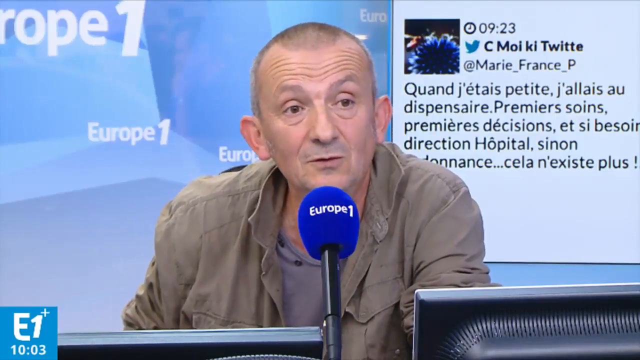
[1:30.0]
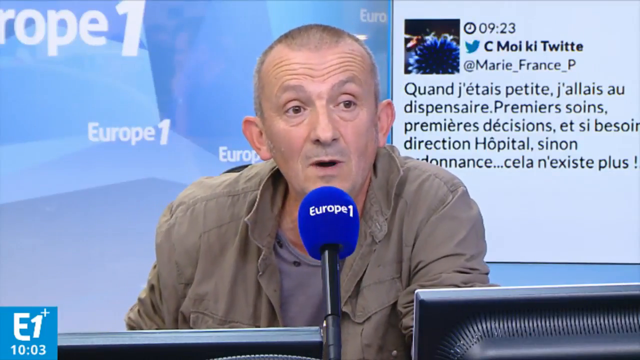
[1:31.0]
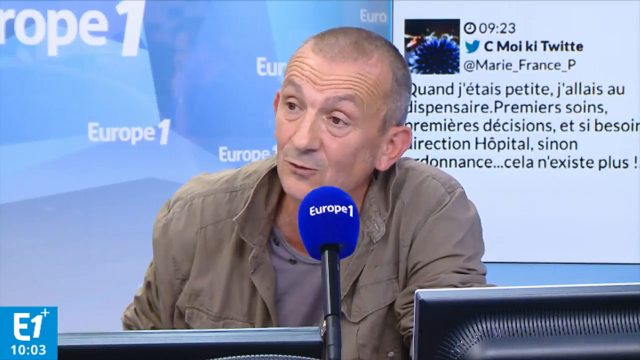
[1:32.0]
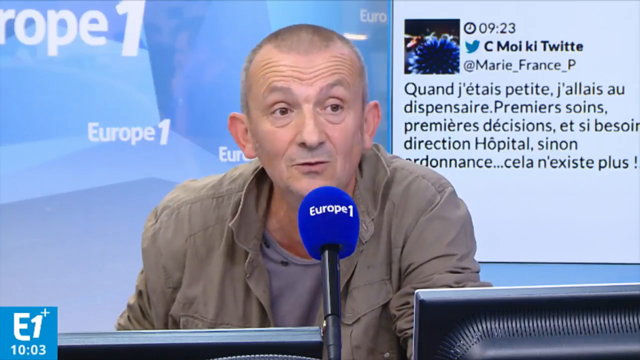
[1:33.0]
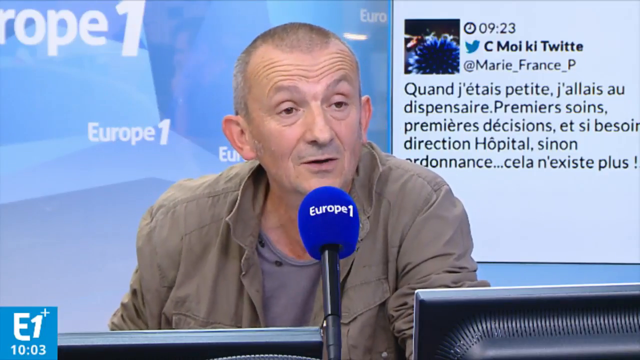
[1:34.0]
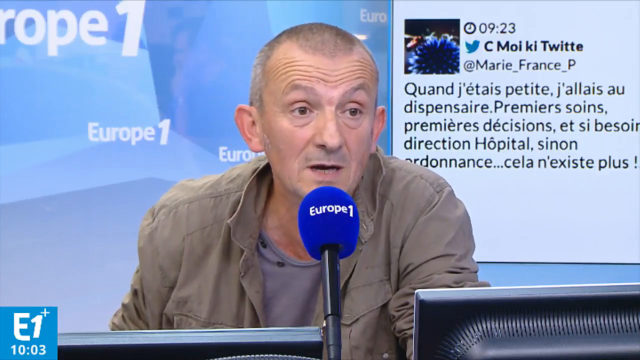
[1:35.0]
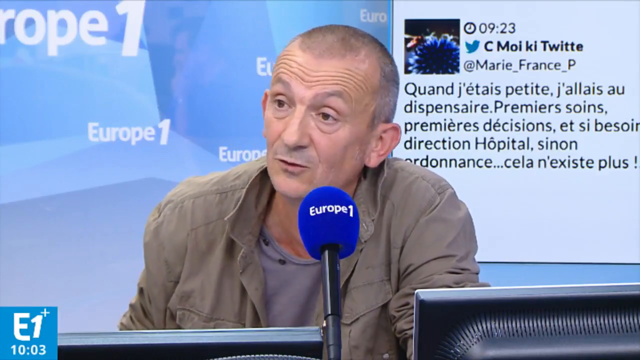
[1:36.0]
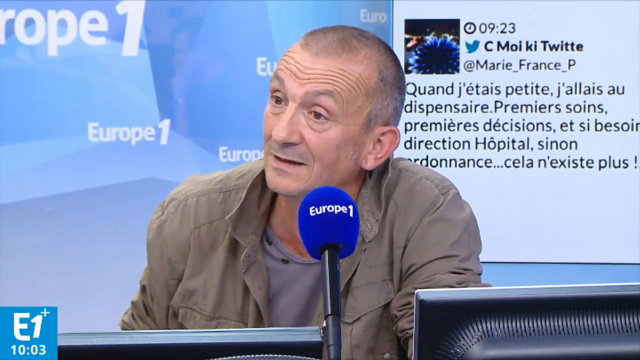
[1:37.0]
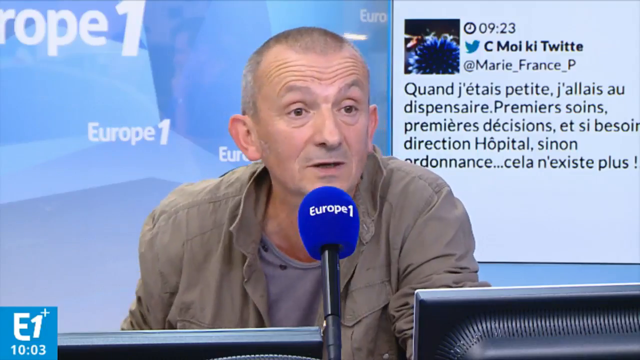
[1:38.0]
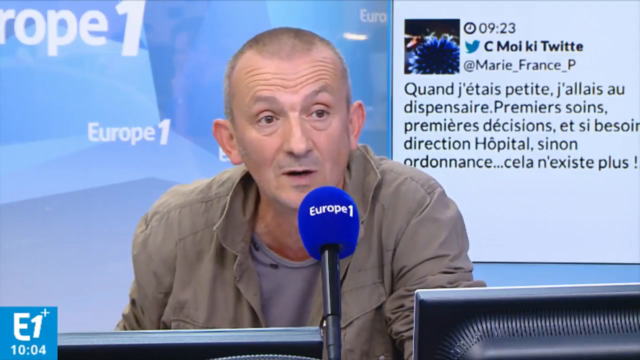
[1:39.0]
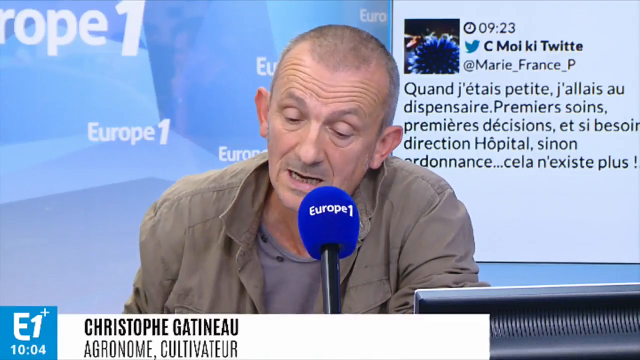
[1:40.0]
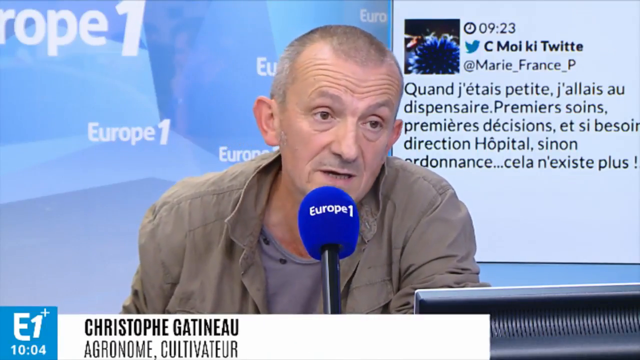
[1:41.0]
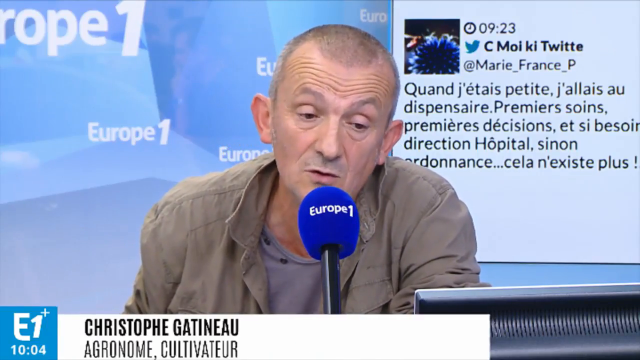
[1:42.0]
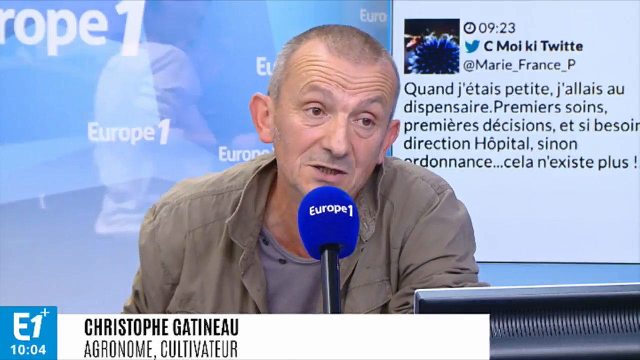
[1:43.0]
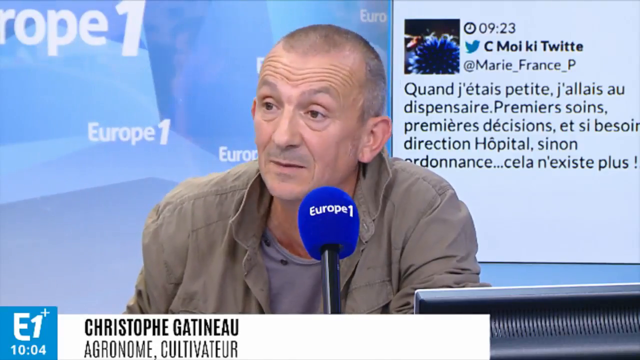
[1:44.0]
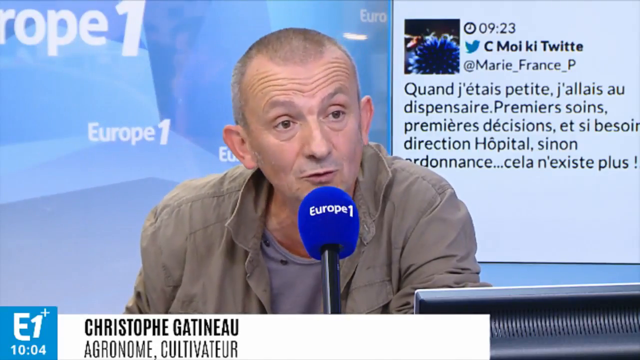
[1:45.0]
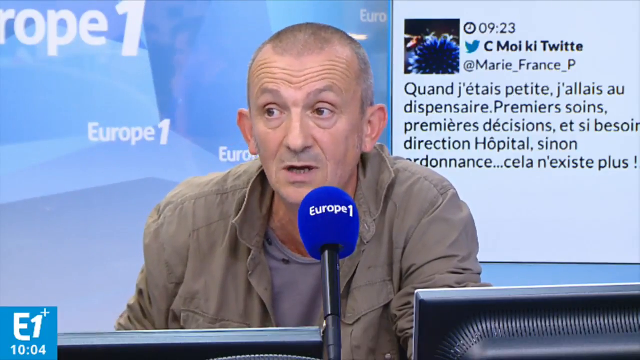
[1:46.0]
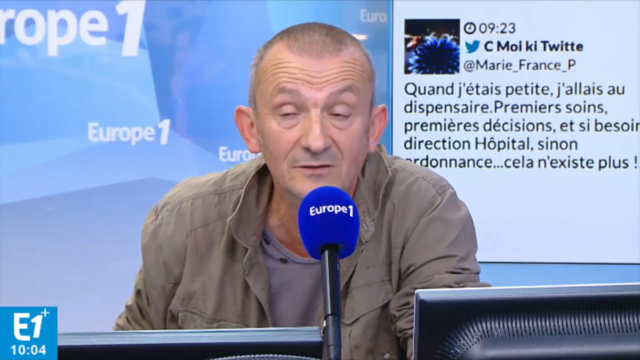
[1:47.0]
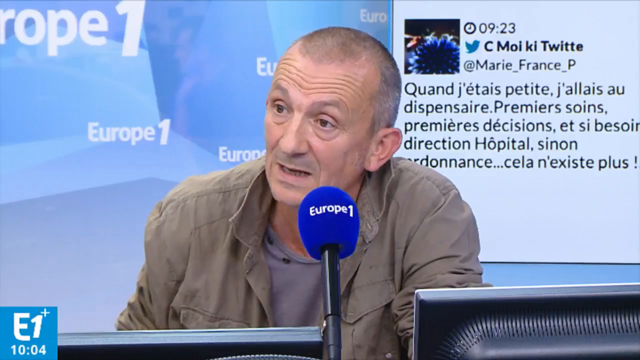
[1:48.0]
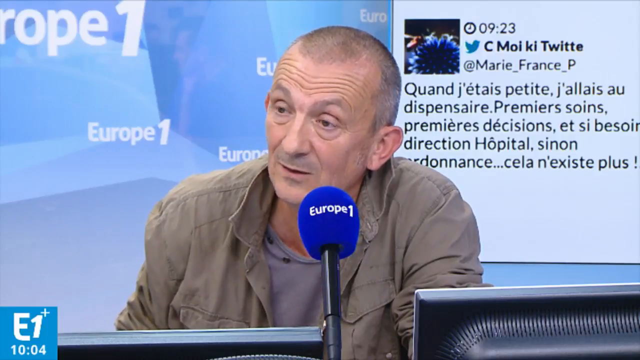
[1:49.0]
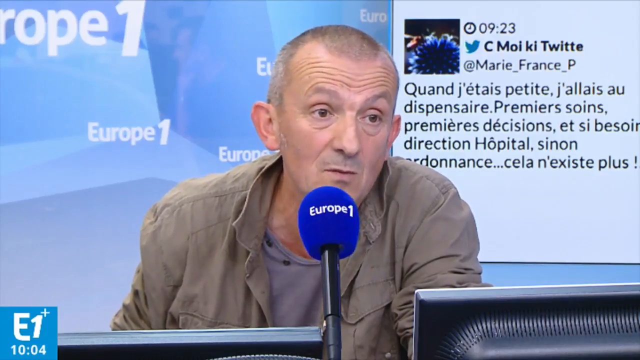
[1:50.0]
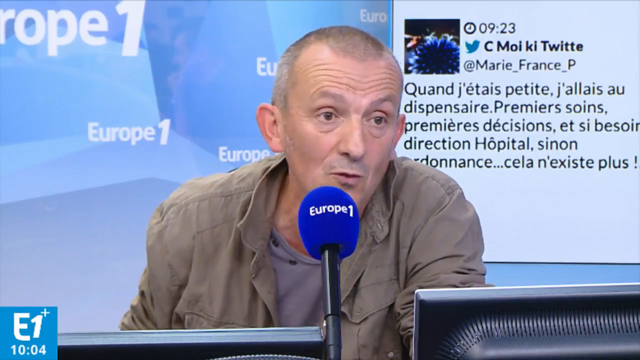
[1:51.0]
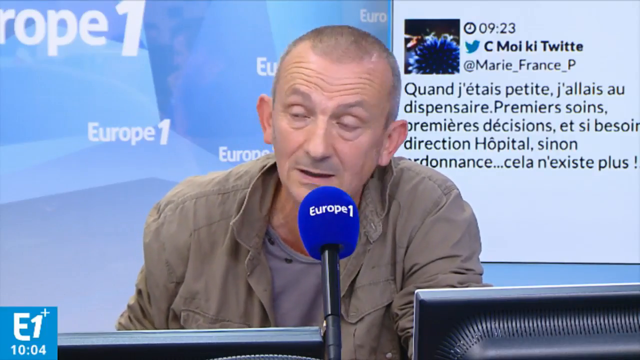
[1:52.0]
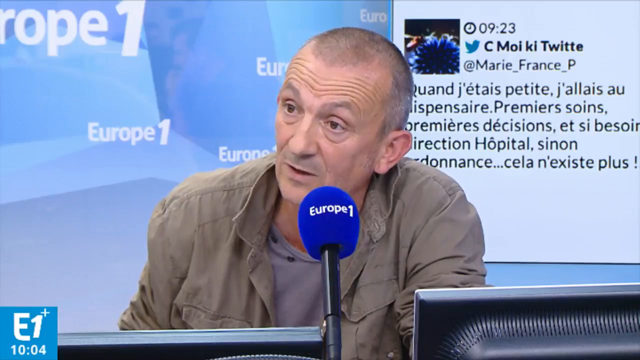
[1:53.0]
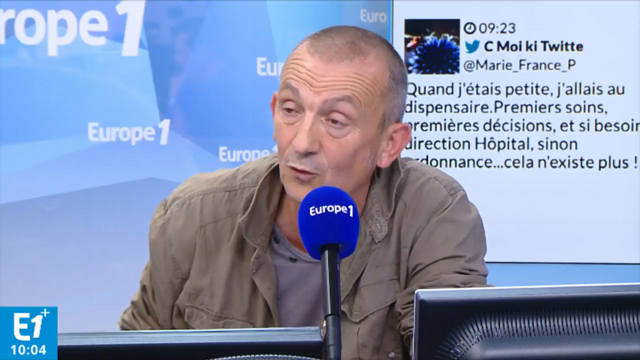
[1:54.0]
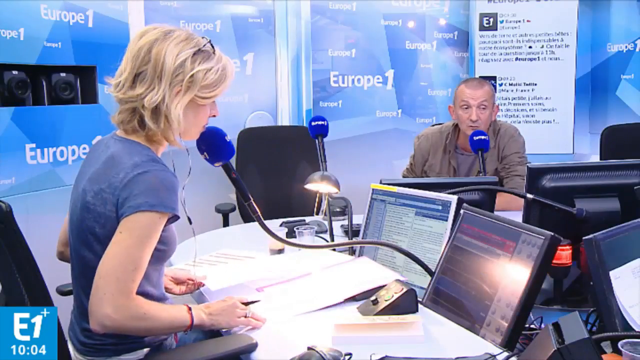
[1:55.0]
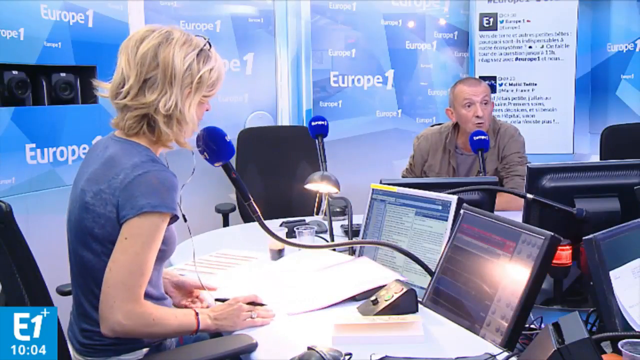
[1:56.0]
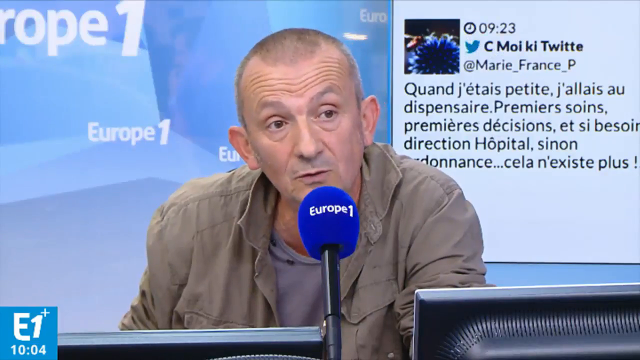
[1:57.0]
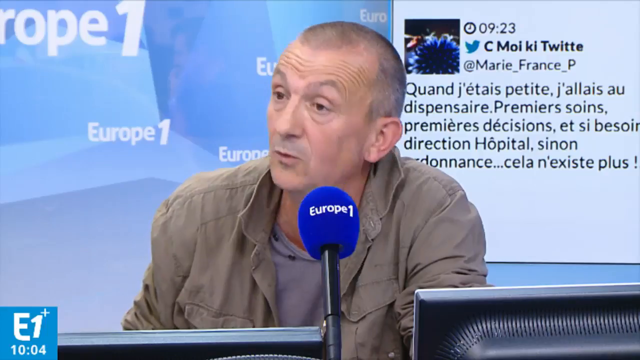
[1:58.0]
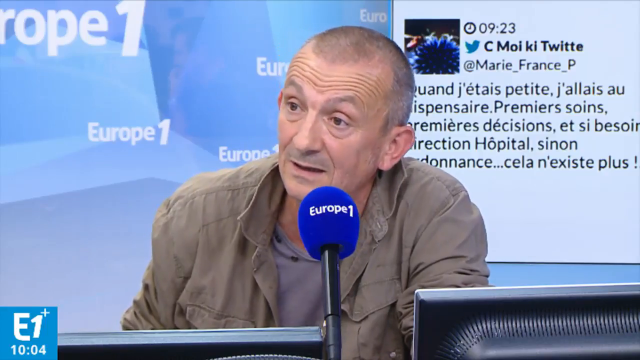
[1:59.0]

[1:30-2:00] The woman is interviewing the man in his late 60s, who is identified as Christopher Hatenoa, an agronomic cultivator. She packs some papers, holds a pen and seems to be reading through the papers. "Europe 1" is written on the screen, and the microphones also read "Europe 1". In the bottom corner the time is shown as 3 past 10, and at the side there is text in an unreadable language. The man seems to be talking about something important while the young woman listens attentively.